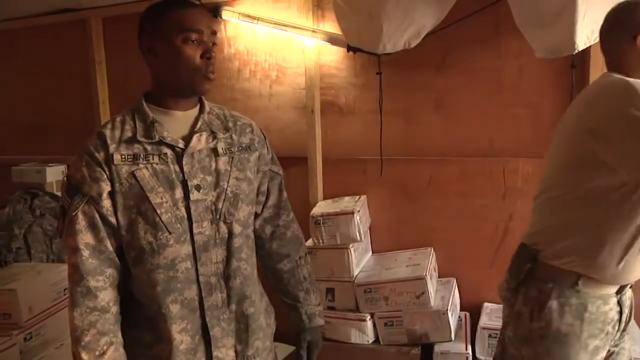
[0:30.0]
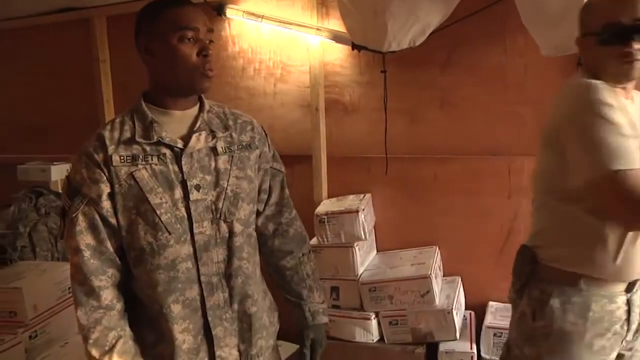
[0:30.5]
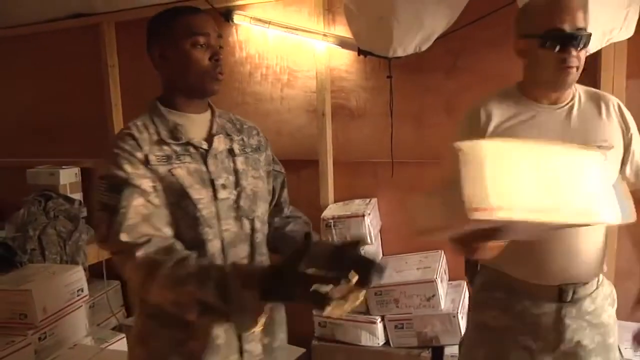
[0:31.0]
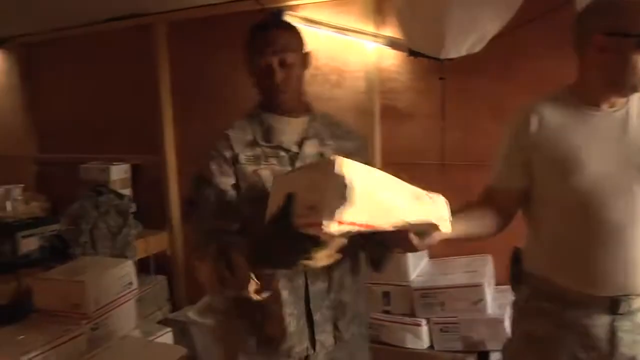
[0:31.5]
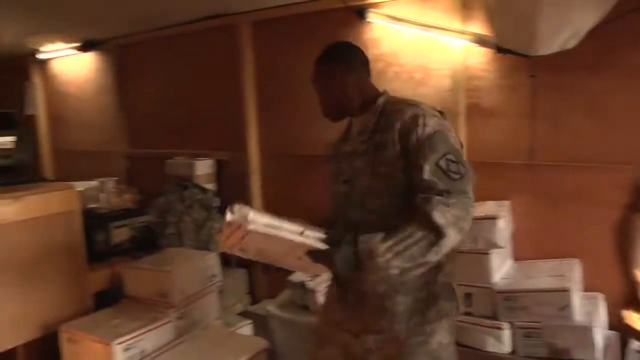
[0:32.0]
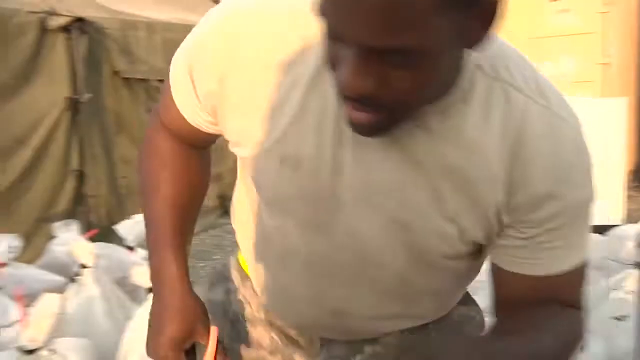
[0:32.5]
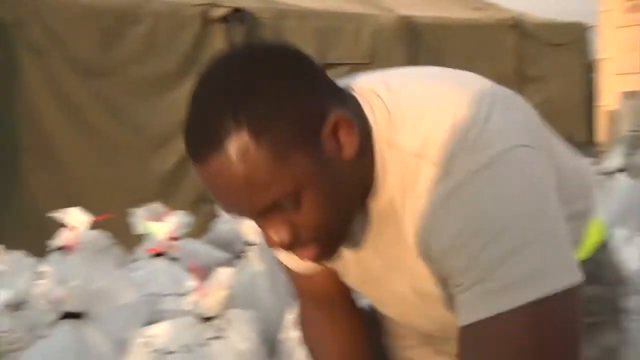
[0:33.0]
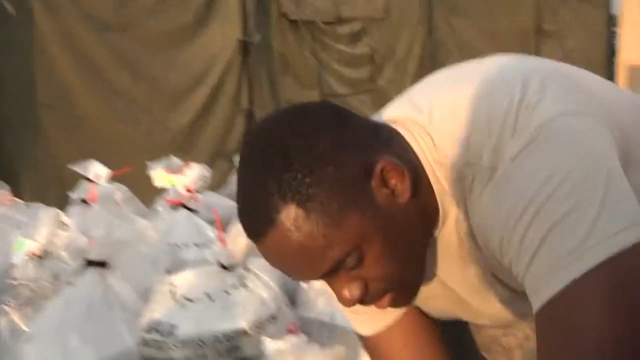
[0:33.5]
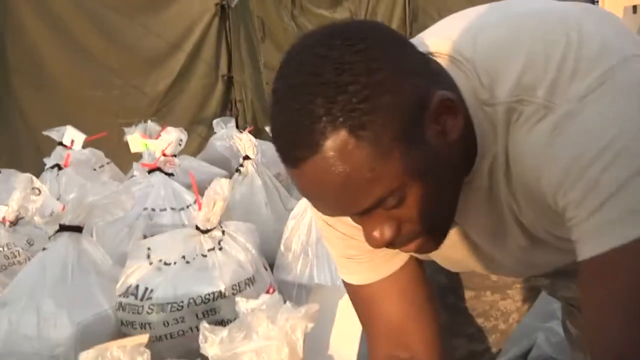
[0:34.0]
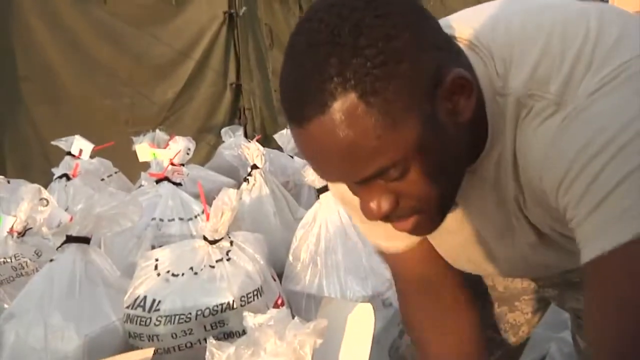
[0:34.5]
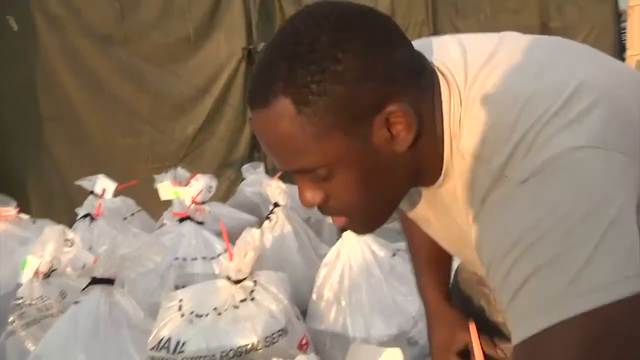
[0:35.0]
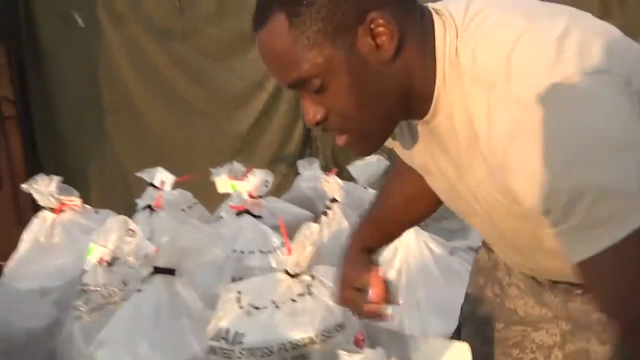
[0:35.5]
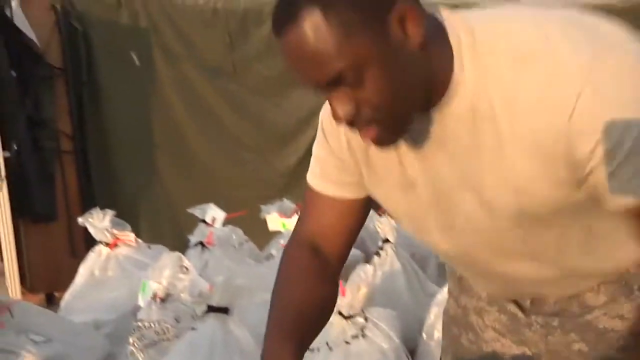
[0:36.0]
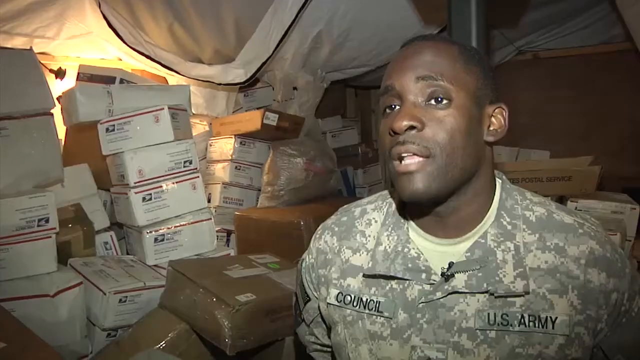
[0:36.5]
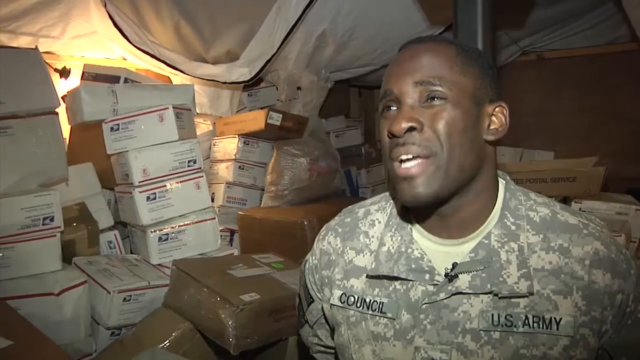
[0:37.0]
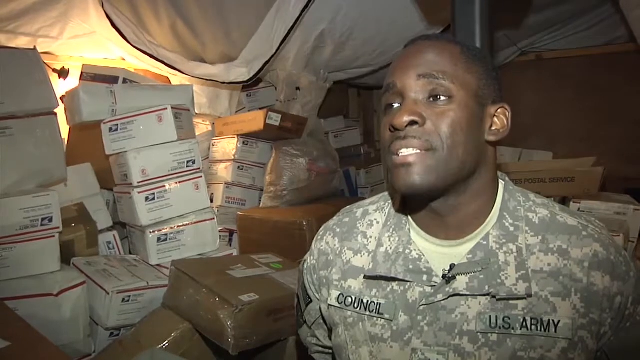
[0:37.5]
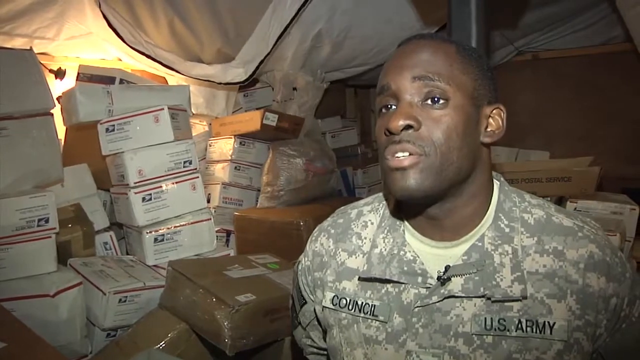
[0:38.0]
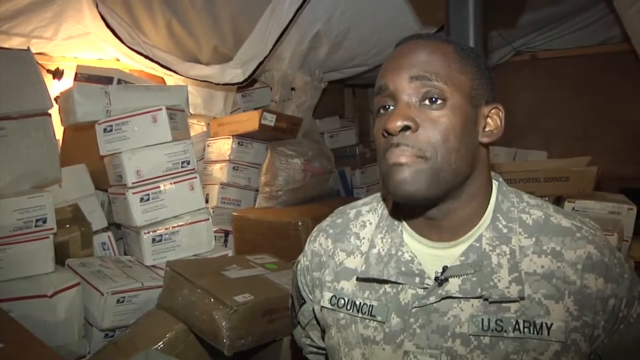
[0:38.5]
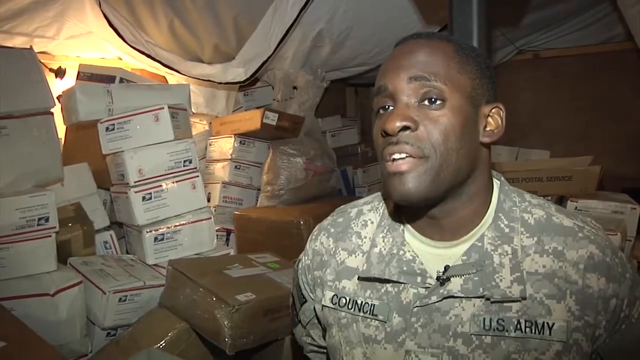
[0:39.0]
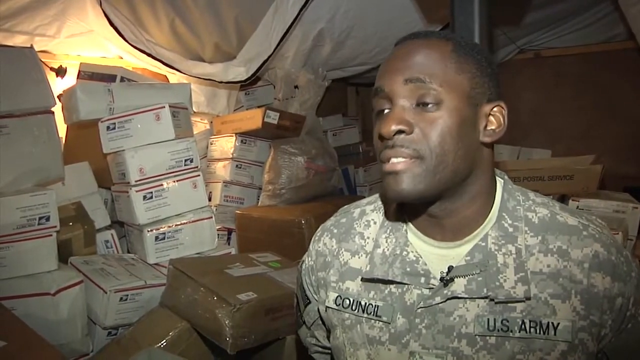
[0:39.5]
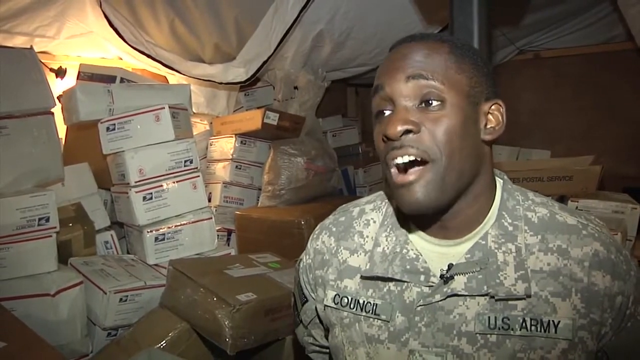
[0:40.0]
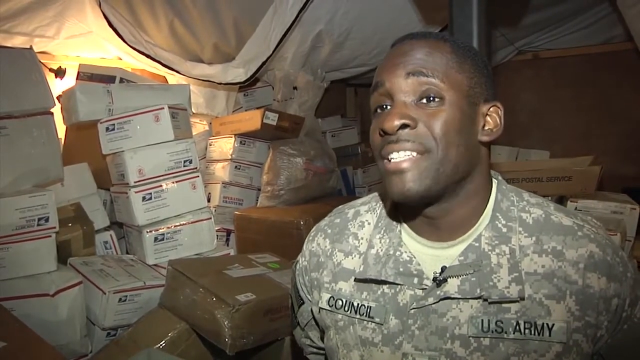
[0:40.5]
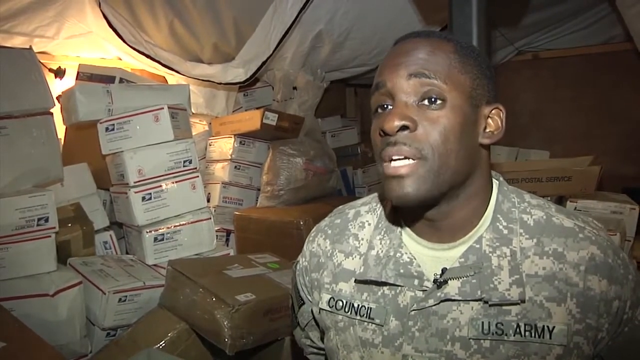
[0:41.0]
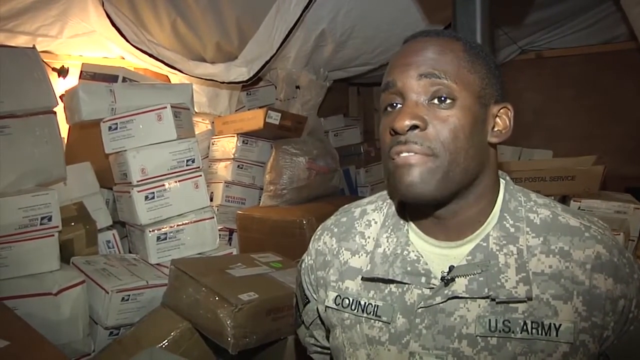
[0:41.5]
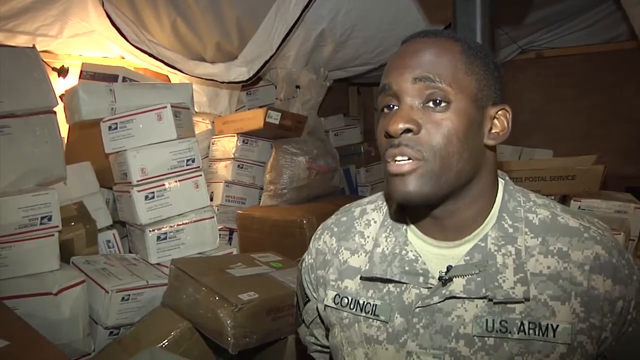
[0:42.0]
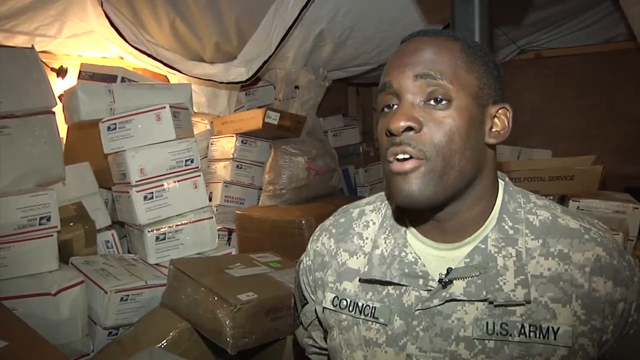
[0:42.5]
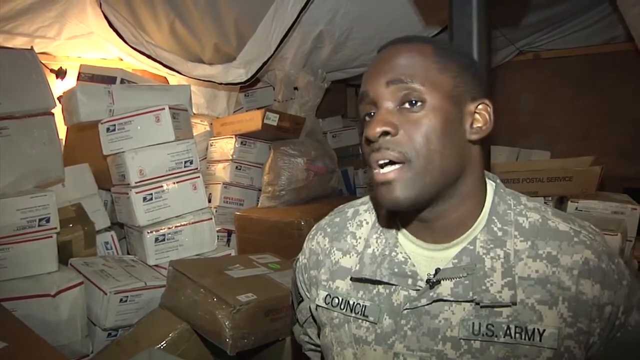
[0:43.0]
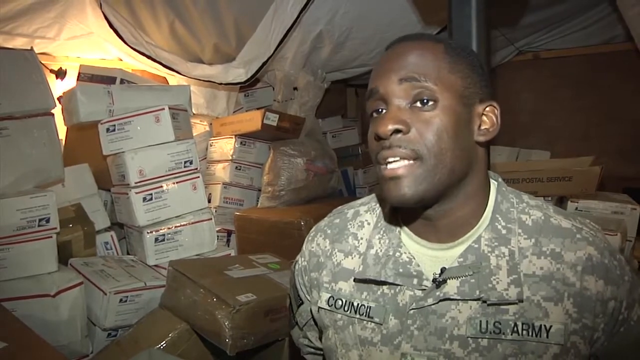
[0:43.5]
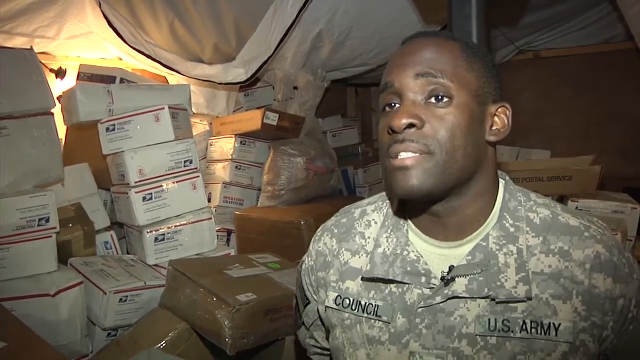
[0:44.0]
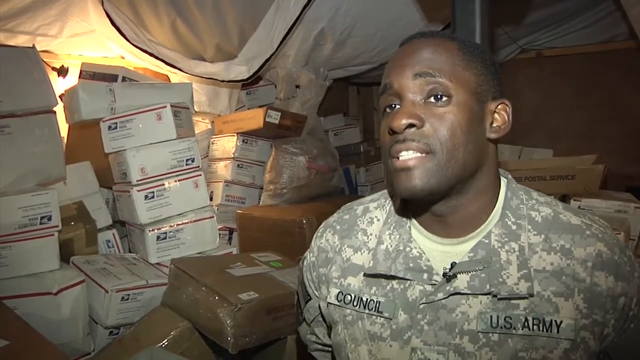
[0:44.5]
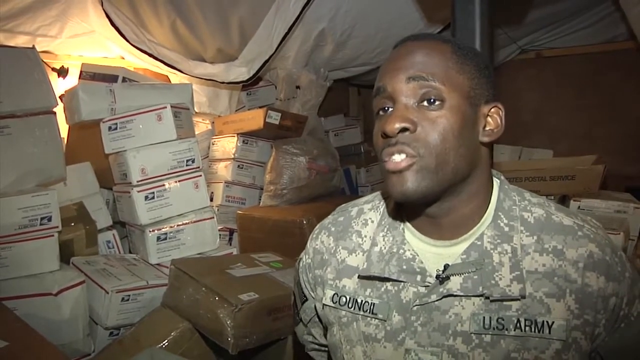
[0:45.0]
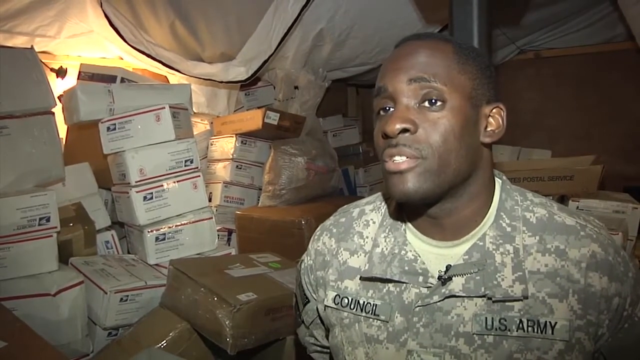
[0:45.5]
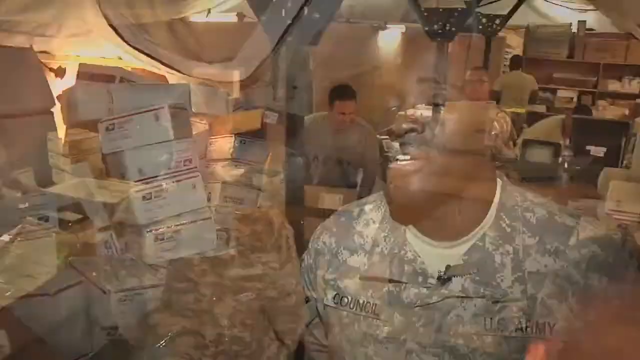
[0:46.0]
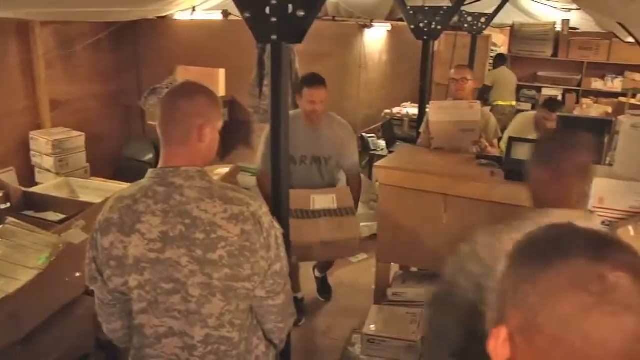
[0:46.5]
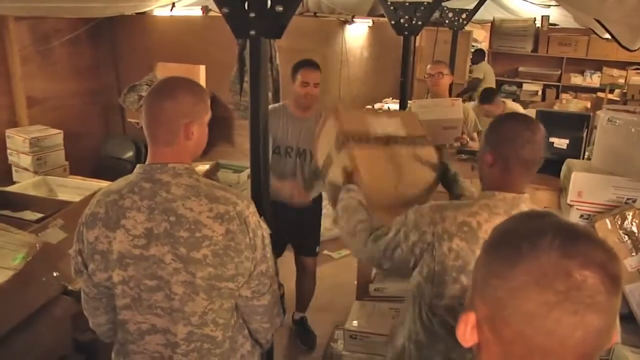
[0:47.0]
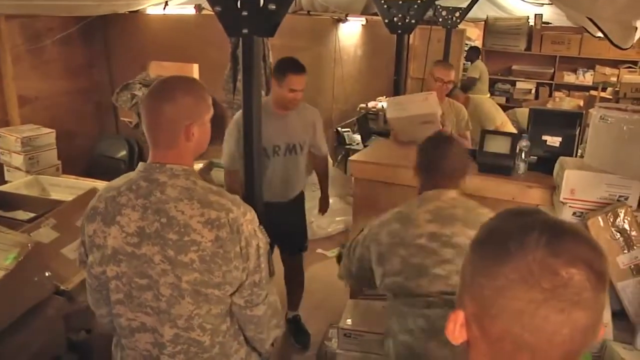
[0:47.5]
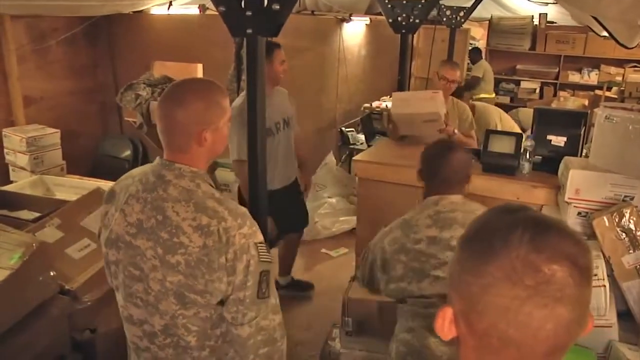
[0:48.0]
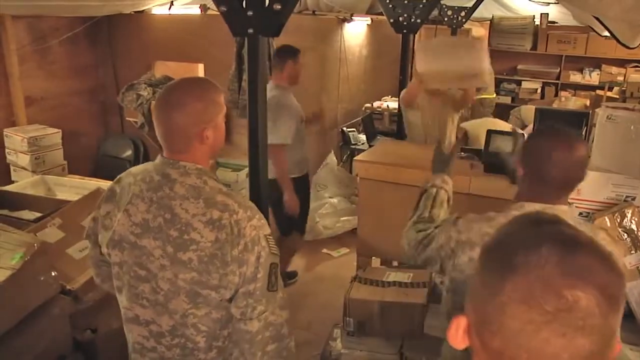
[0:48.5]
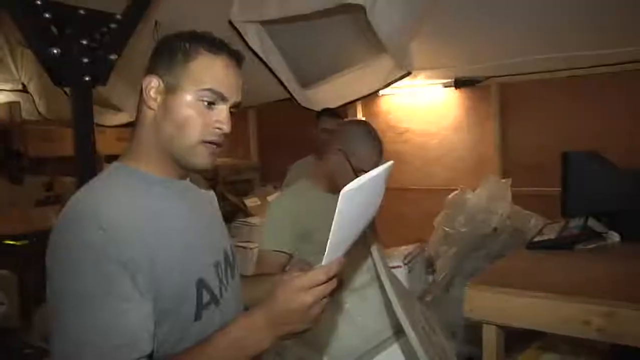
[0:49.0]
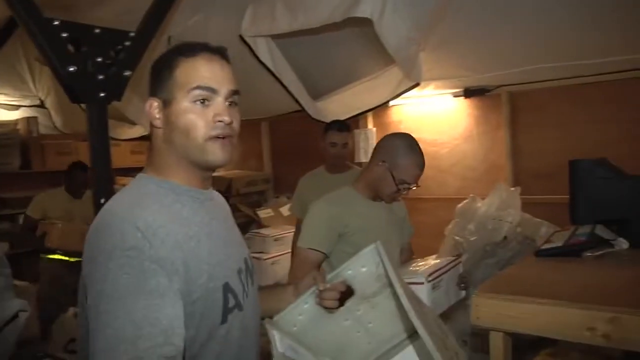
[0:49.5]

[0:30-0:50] A group of soldiers in uniform appears, followed by a single soldier: a Black man with very short black hair in a tan-colored T-shirt, slightly stooped over white plastic bags. Next to him are white plastic bags tightly closed with black and red ribbons. Next, a Black man in army uniform is shown; "Council" is written on his right jacket pocket and "U.S. Army" on his left. A small microphone is attached to the collar of his jacket, and around him is a large pile of boxes, some white and others brown. He speaks to an unseen individual. Then a group of army men in a tent sort through and organize boxes; the tent is full of boxes.